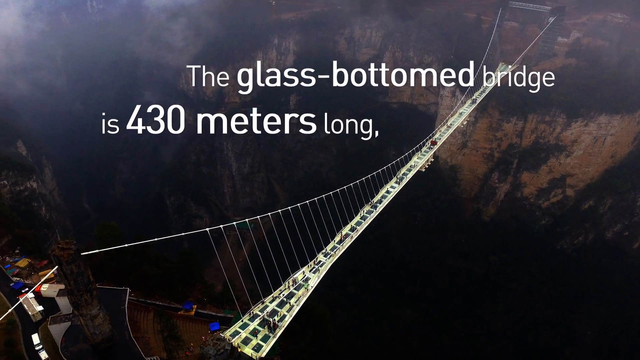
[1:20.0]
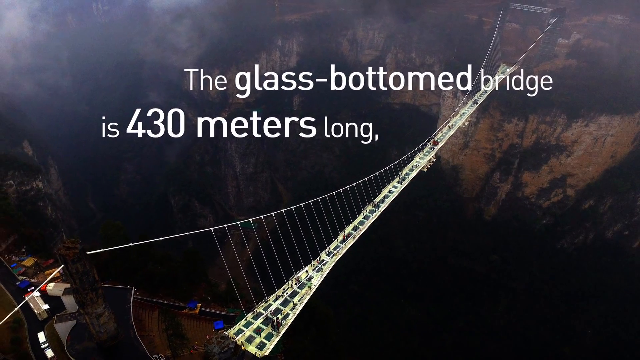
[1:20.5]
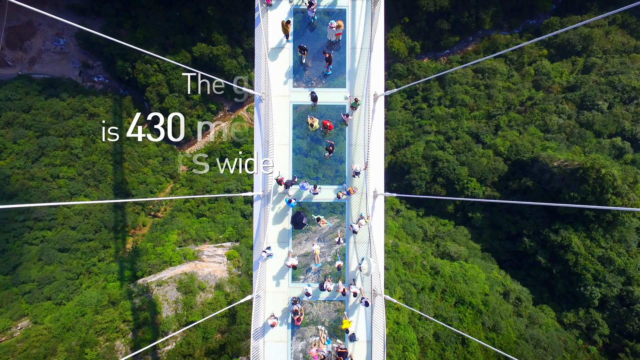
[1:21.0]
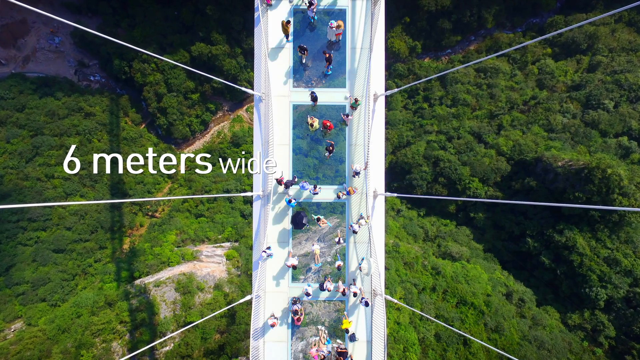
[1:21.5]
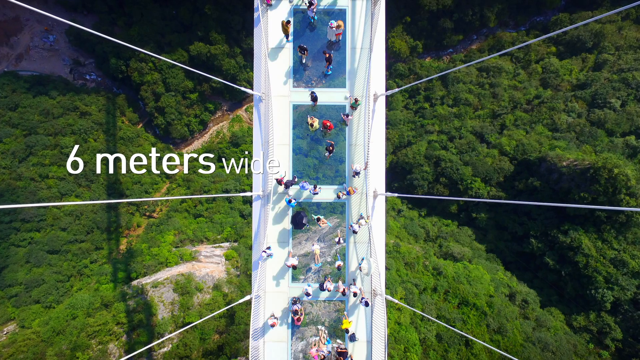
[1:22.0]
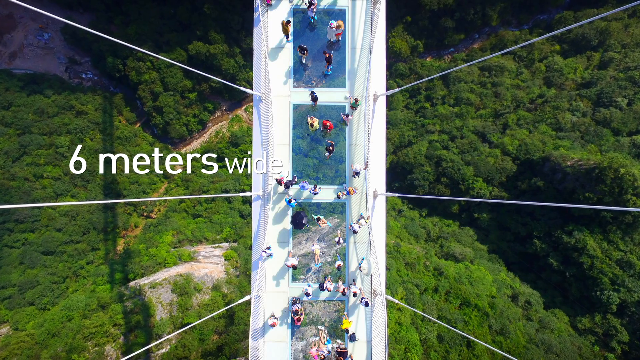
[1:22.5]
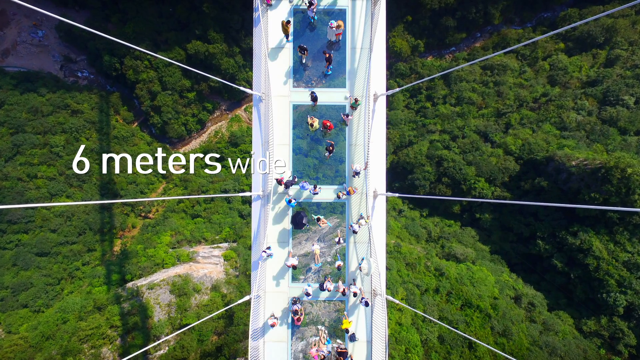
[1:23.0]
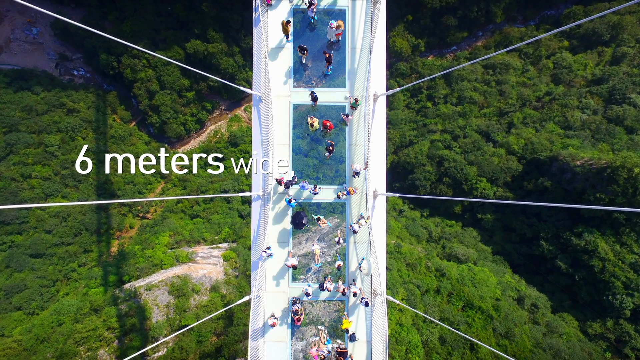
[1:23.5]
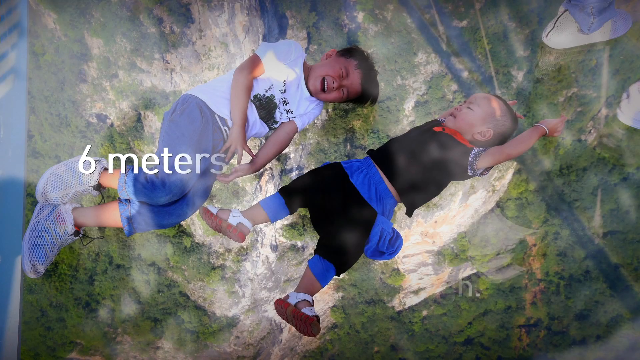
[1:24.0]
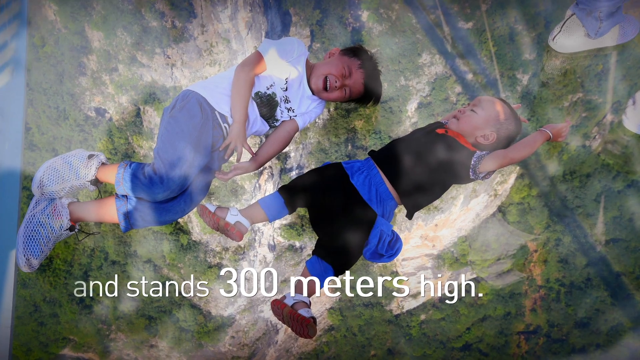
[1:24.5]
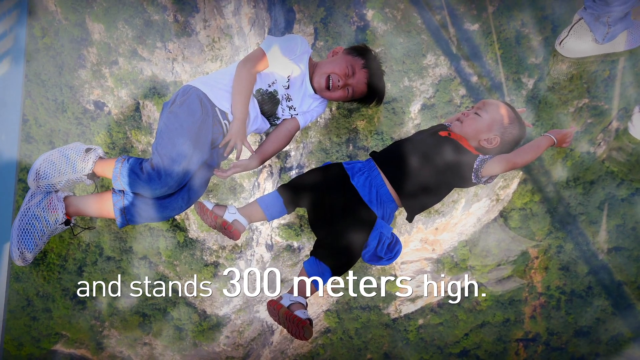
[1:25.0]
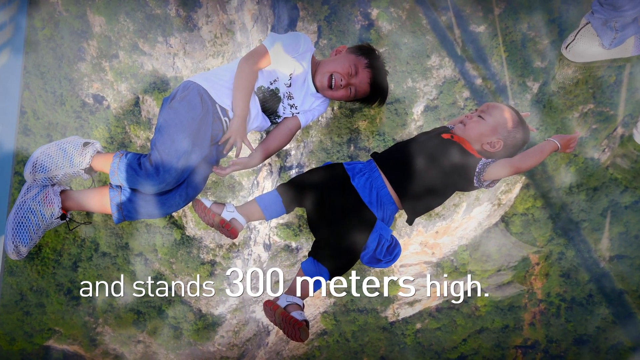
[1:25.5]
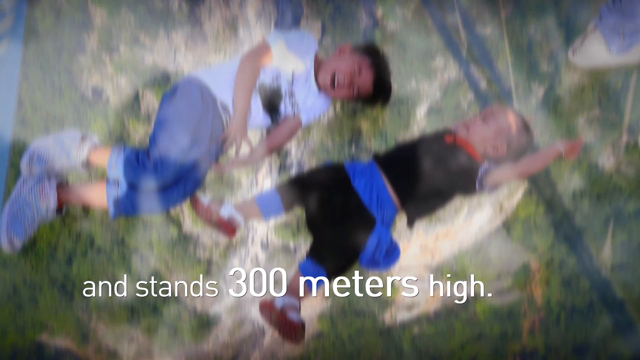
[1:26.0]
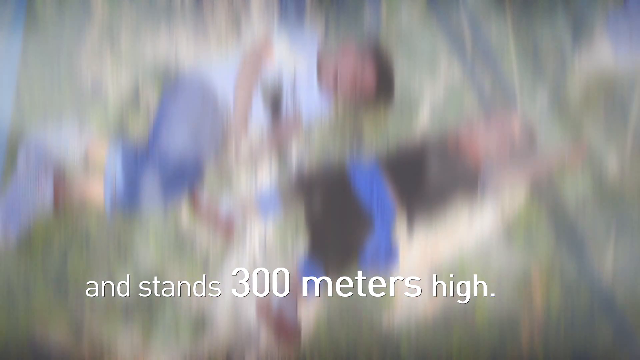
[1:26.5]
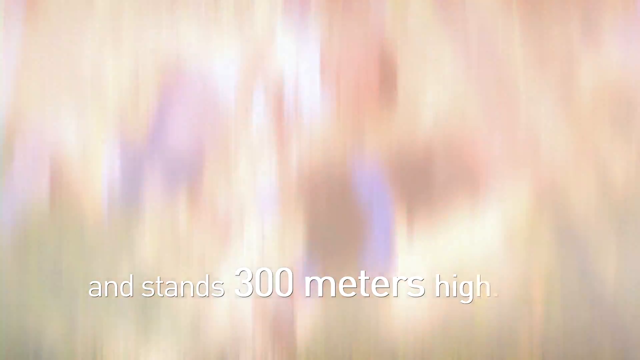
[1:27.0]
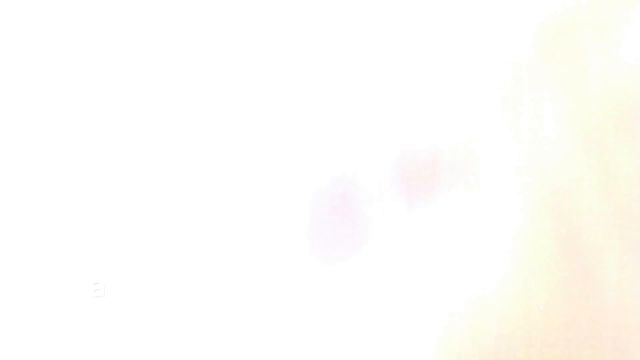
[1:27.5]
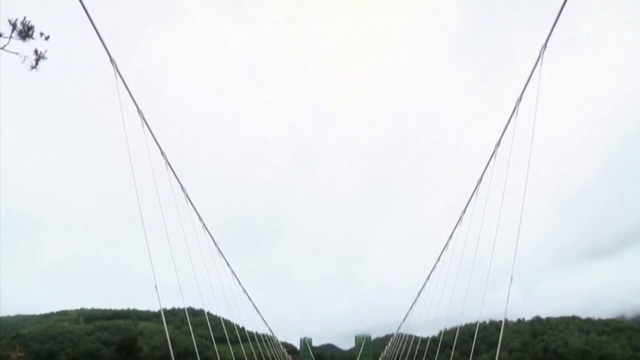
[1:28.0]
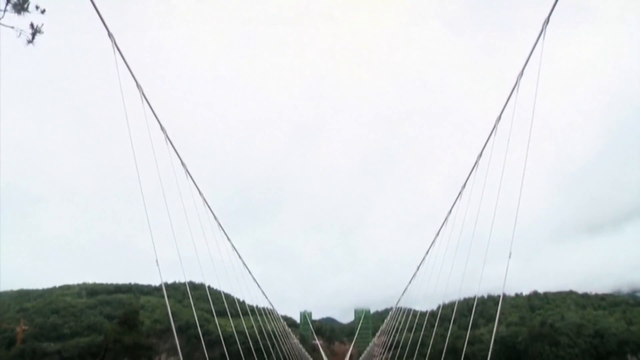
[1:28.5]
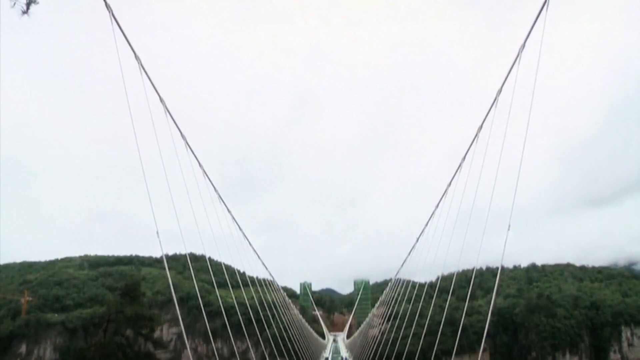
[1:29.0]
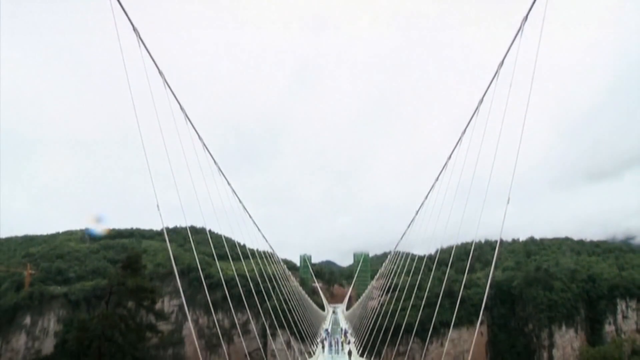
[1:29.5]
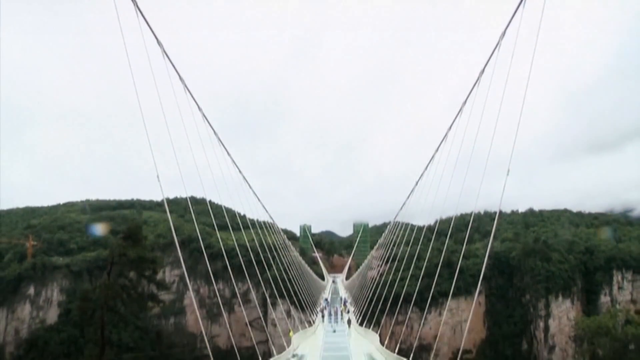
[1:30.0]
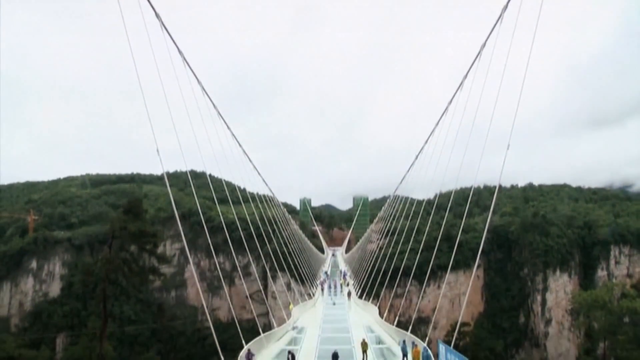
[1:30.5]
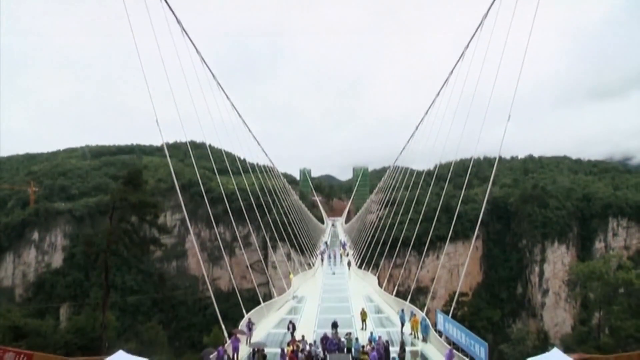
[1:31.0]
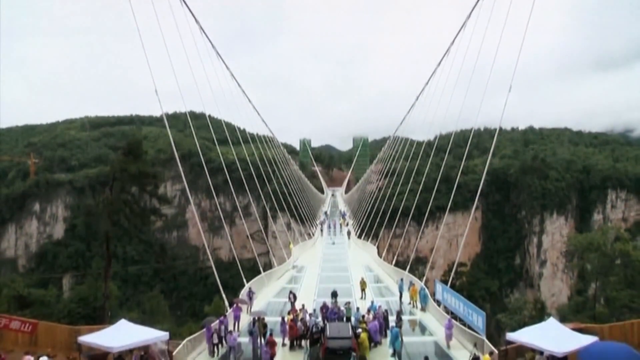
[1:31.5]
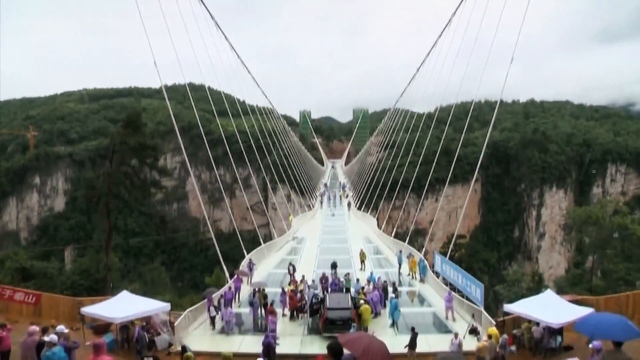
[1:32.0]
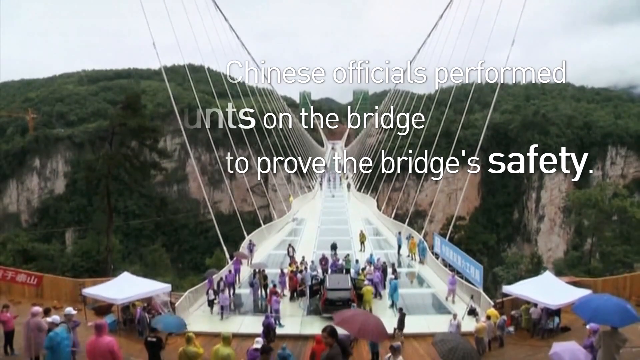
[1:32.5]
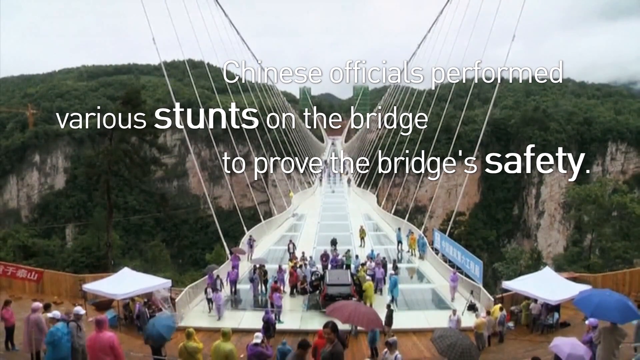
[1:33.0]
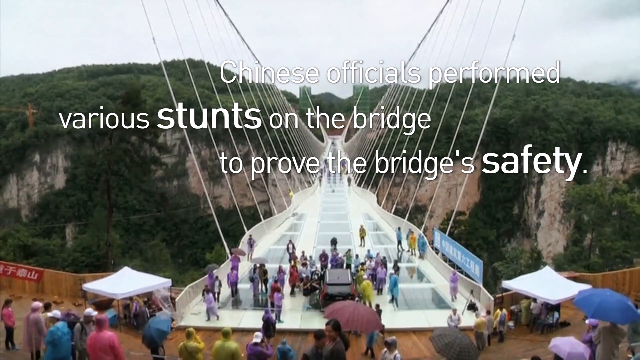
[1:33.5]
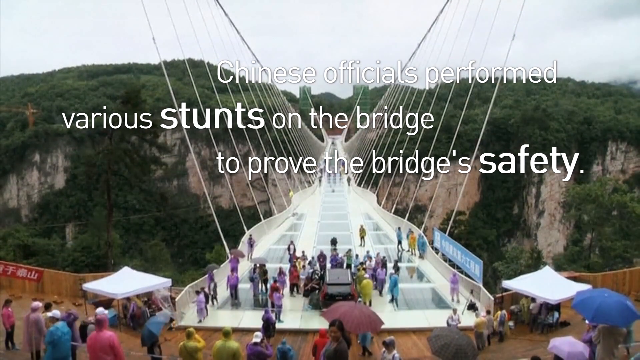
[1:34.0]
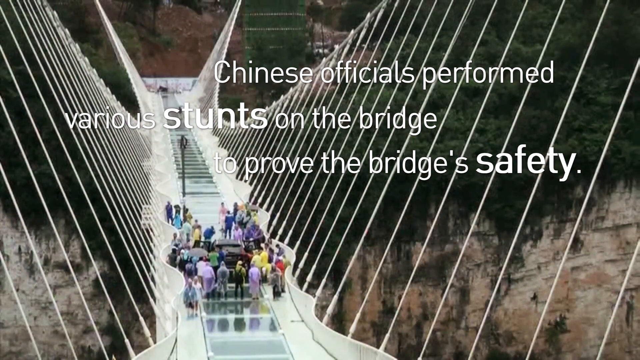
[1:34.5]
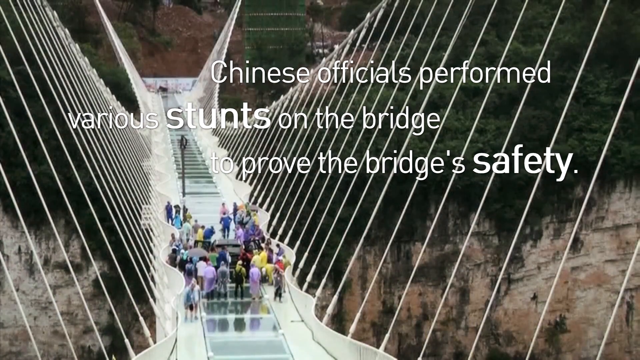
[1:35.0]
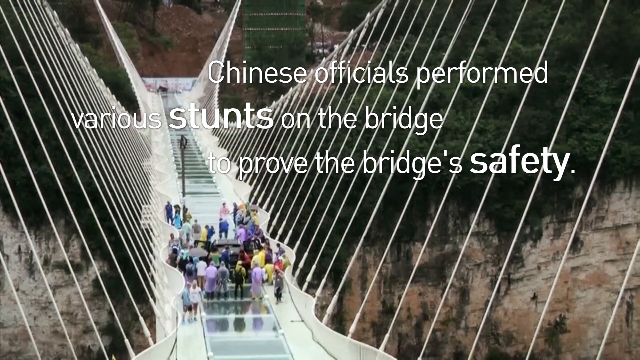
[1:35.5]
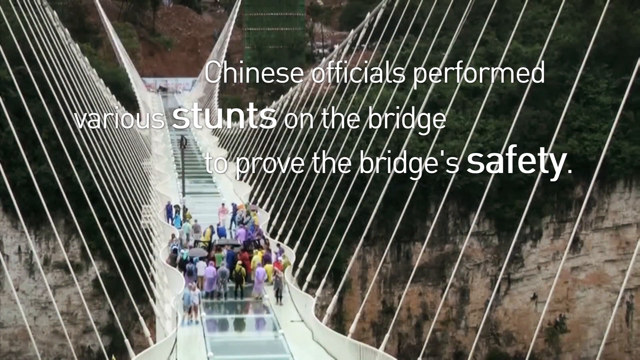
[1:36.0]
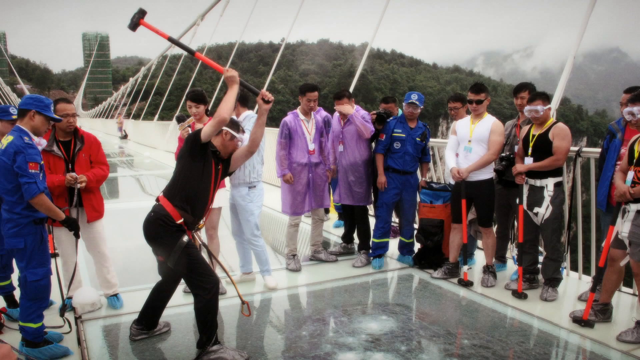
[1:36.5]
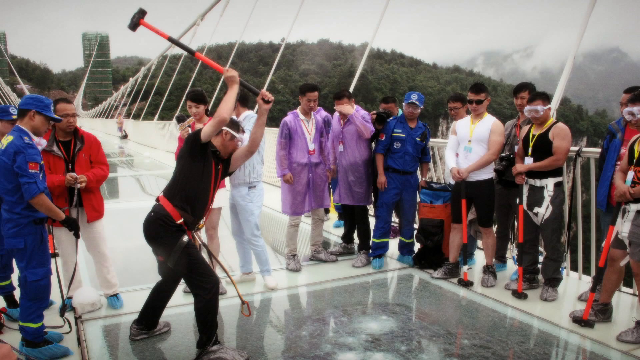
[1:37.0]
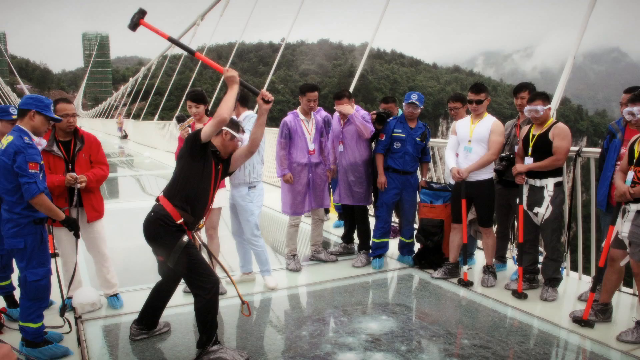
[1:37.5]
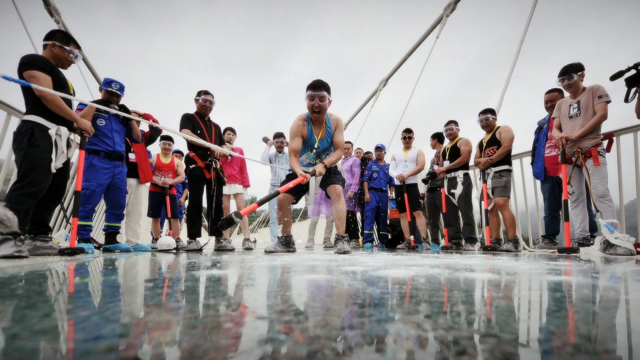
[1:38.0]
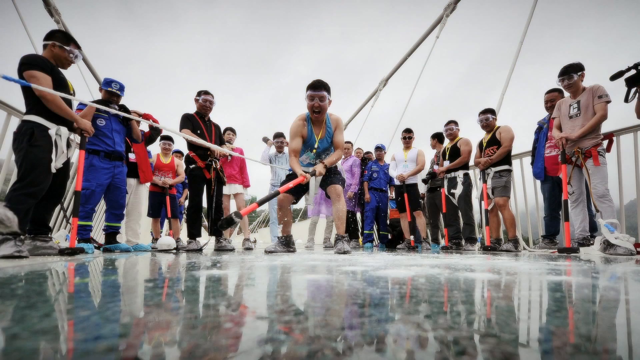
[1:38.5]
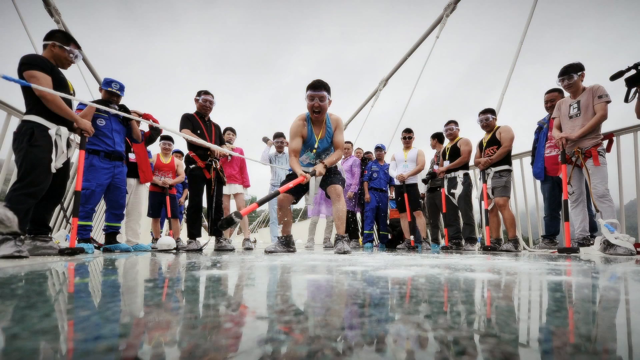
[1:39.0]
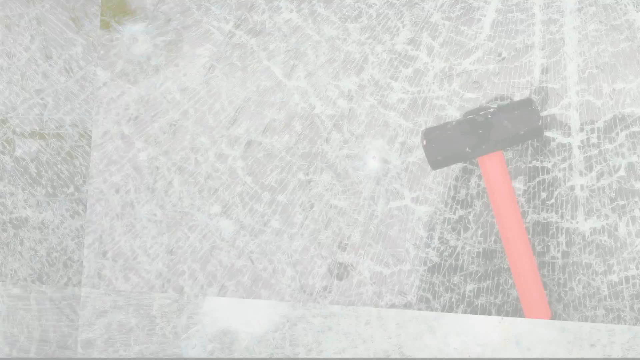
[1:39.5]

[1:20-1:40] A still shot shows the incredibly long bridge connecting one mountain to the other, with white text reading "the glass bottom bridge is 430 meters long." Clouds above it show how high up the bridge is. The video cuts to a top-down shot of a section of the bridge with quite a few people walking over it, maybe 20, and trees right below it, with text reading "six meters wide." Another cut shows text reading "and stands 300 meters high" as two kids who look incredibly scared lie on top of the glass bridge, looking like they are crying. A new shot, in what looks like rain, shows the entrance of the bridge with text reading "Chinese officials performed various stunts on the bridge to prove the bridge's safety."